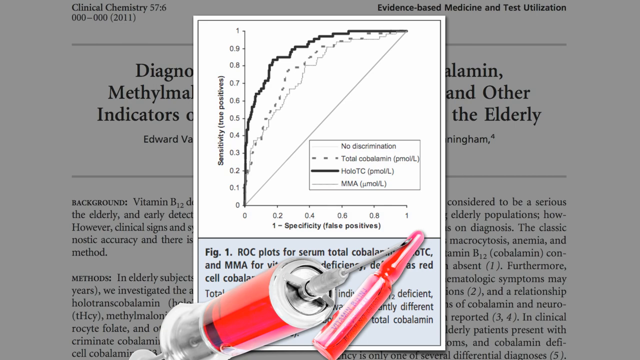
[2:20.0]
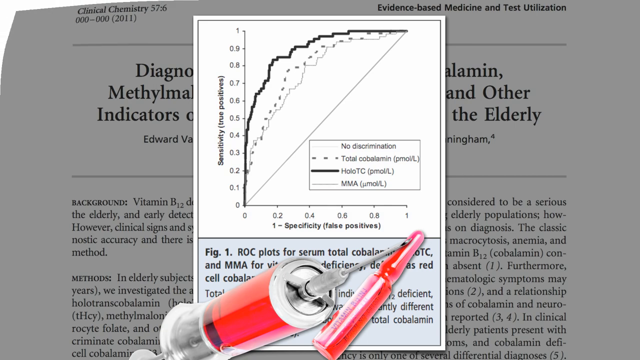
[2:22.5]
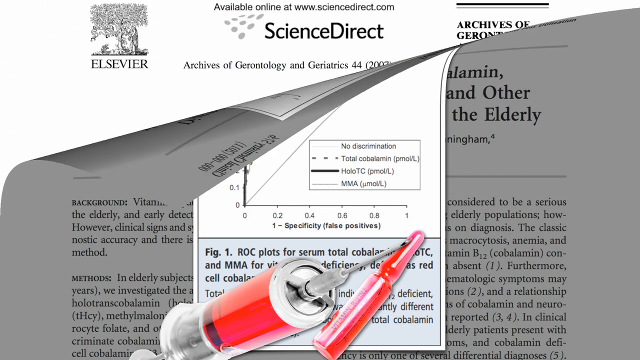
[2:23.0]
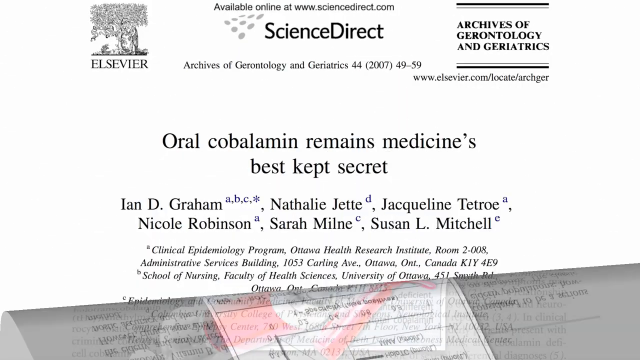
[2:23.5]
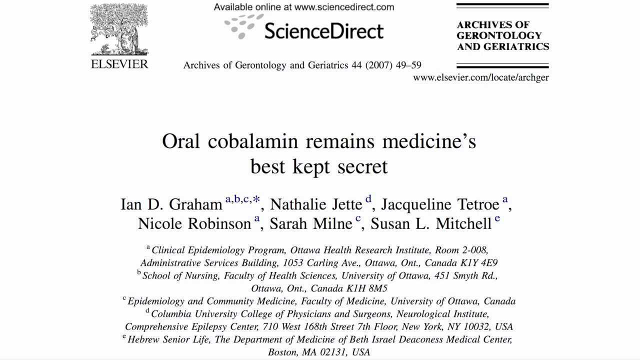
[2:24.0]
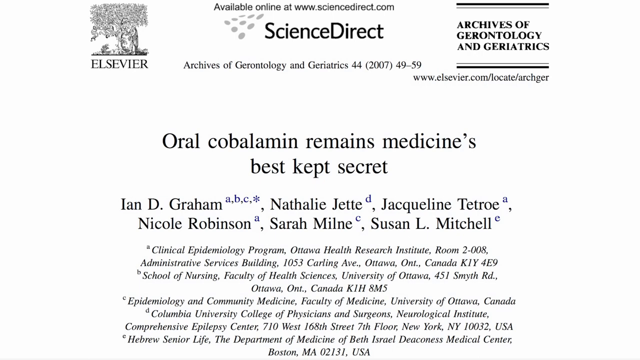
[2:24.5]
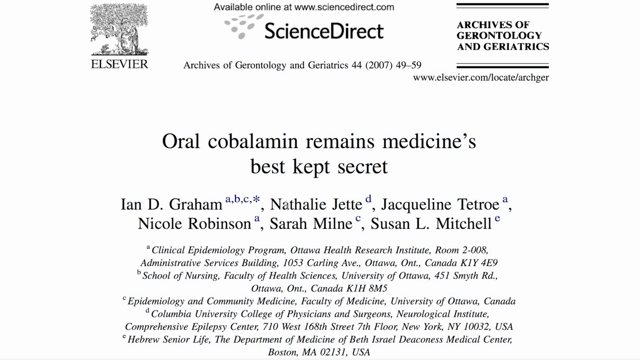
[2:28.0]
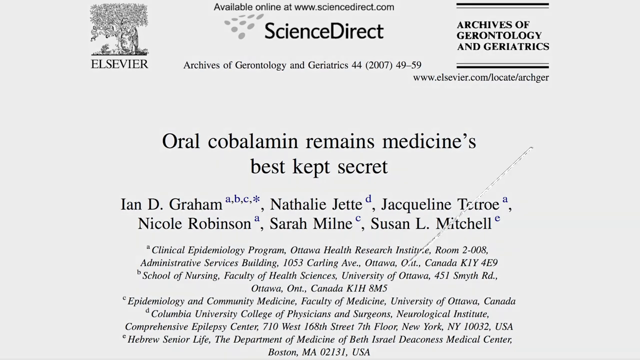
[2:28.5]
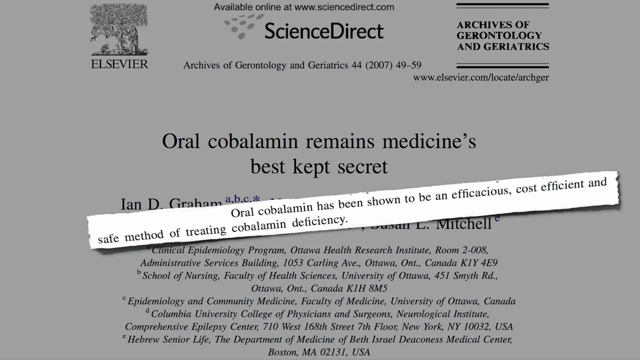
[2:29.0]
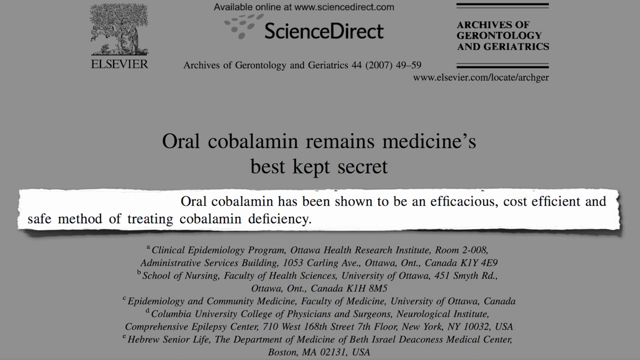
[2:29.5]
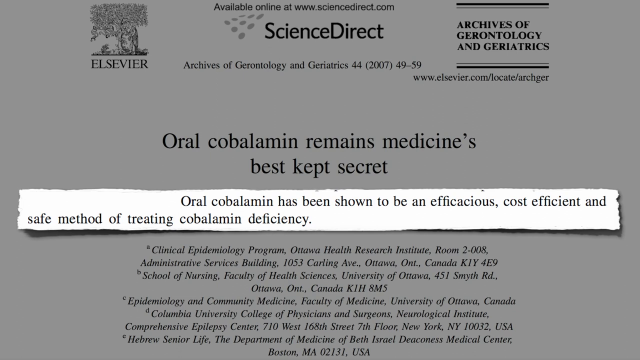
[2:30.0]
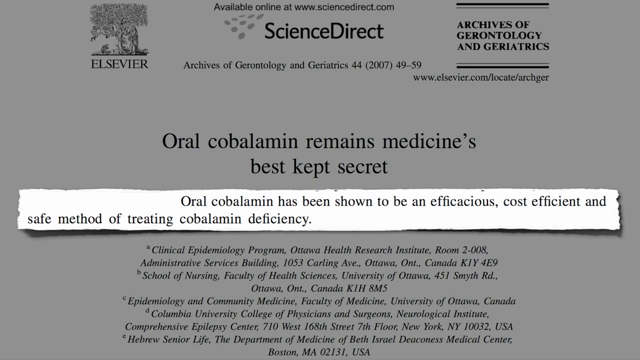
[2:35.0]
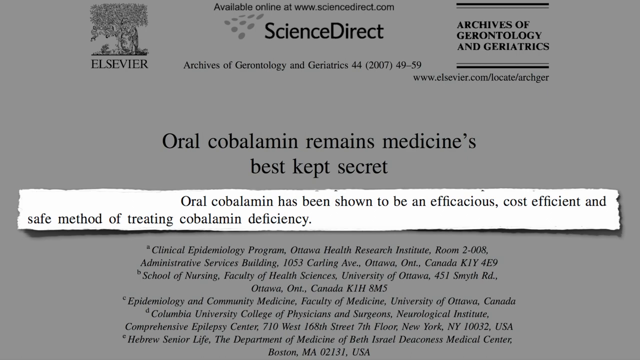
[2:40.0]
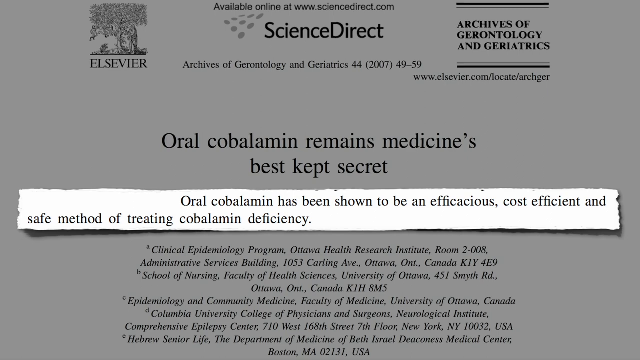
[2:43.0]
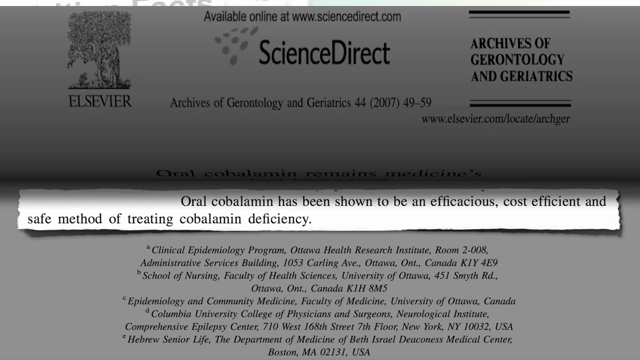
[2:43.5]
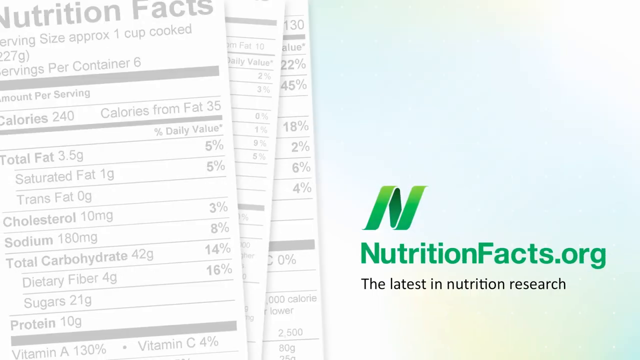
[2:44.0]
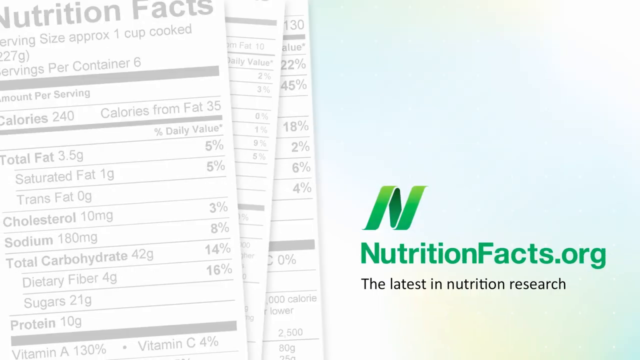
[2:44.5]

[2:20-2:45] The page begins to pull away from the top left, revealing a new white background with a lot of black text. The title says "Oral Cobalamin Remains Medicine's Best-Kept Secret." At the top of the screen it says "Science Direct available online at www.sciencedirect.com," and there is a logo of a tree at the top left. Under the title, it says the paper was written by Andy Graham, Nathalie Jett, Jacqueline Tetreault, Nicole Robinson, Sarah Milne and Susan L. Mitchell, with some addresses underneath. A long rectangular text box then overlays the screen and dims the rest of the paper; it says "Oral Cobalamin has been shown to be an efficient, cost-efficient, and safe method of treating cobalamin deficiency." That slide flips down and transitions to the NutritionFacts.org link again, with the nutrition facts images on the left of the screen.